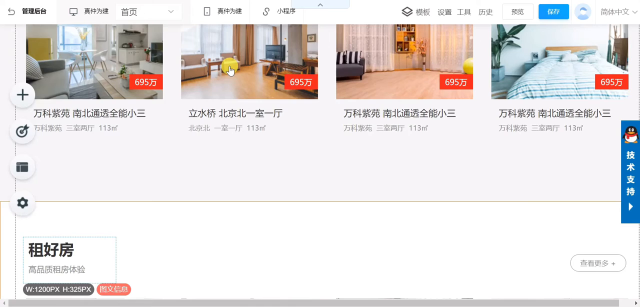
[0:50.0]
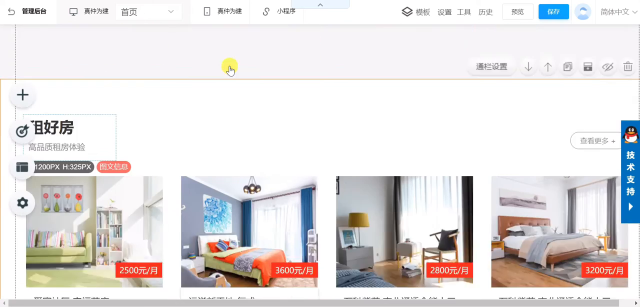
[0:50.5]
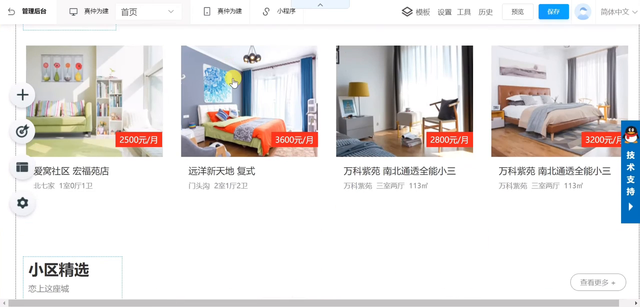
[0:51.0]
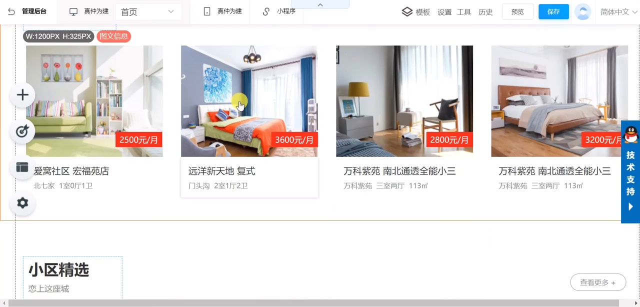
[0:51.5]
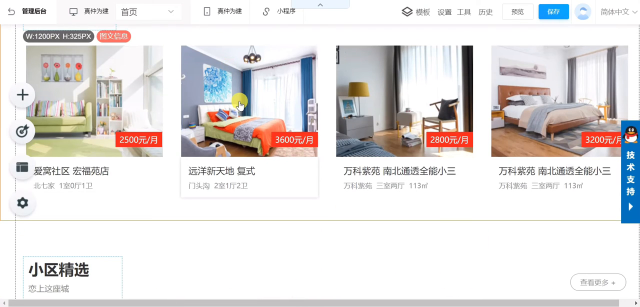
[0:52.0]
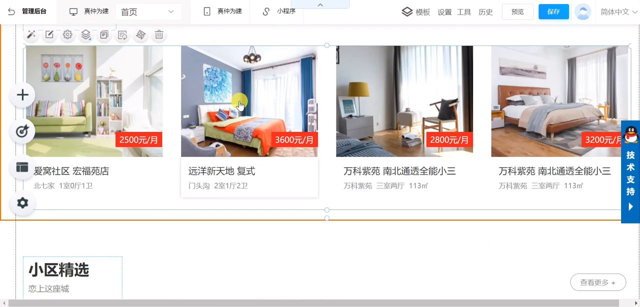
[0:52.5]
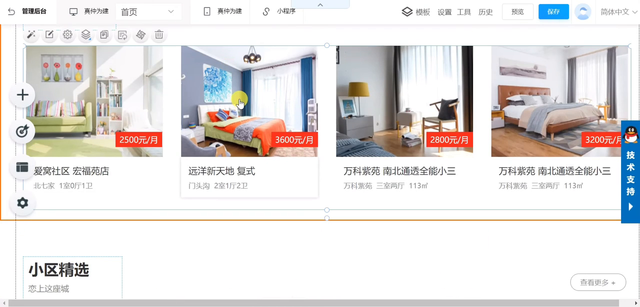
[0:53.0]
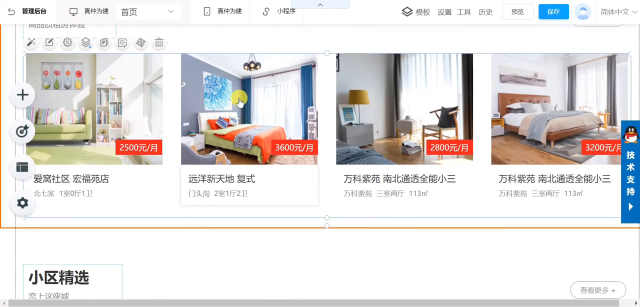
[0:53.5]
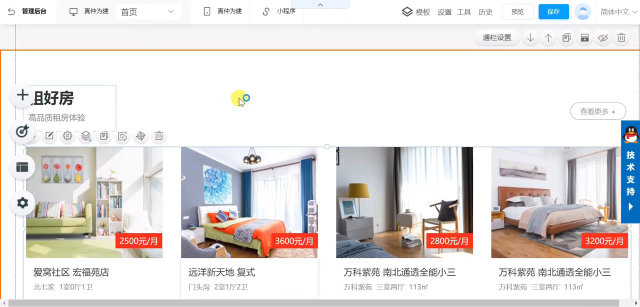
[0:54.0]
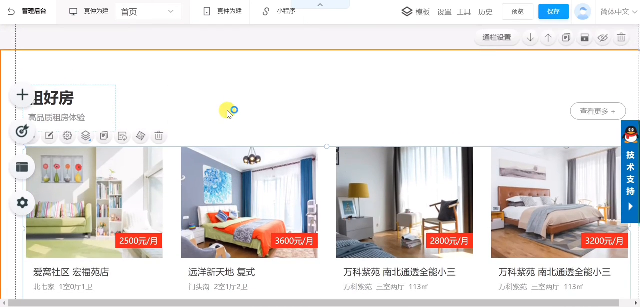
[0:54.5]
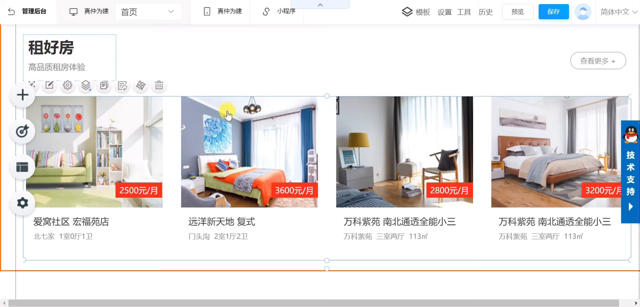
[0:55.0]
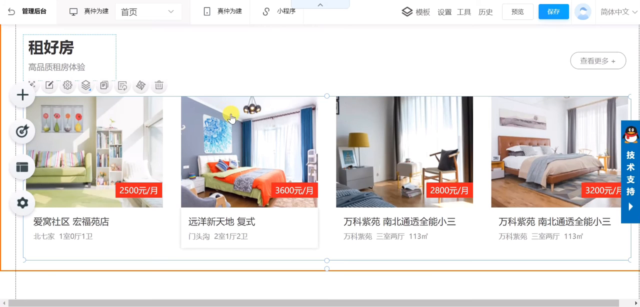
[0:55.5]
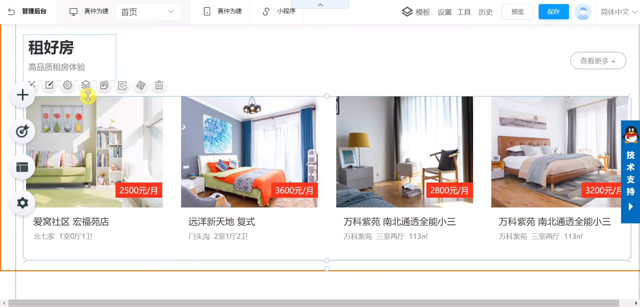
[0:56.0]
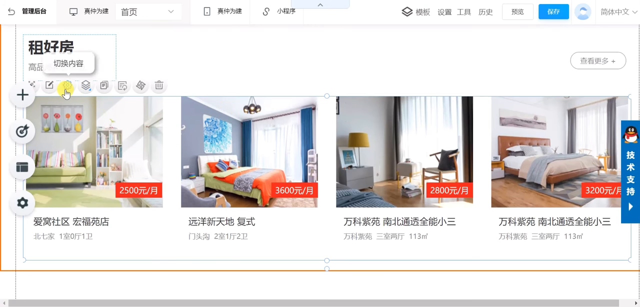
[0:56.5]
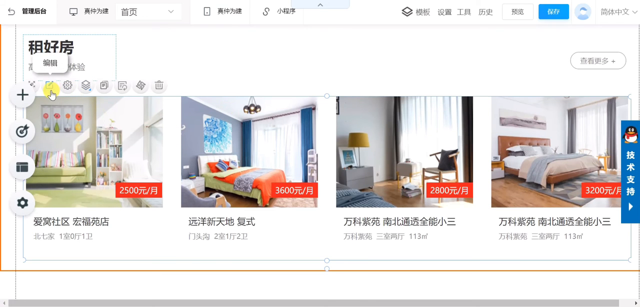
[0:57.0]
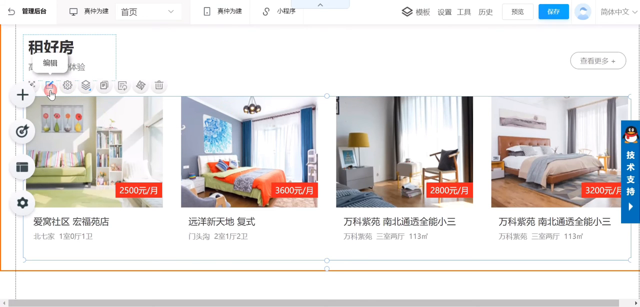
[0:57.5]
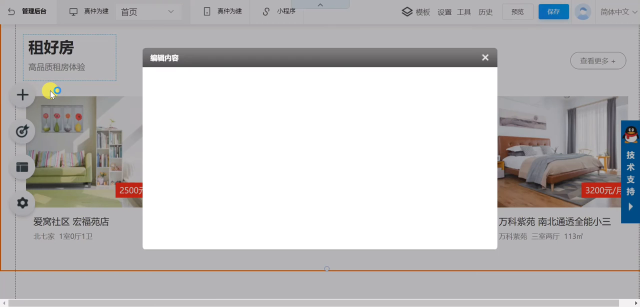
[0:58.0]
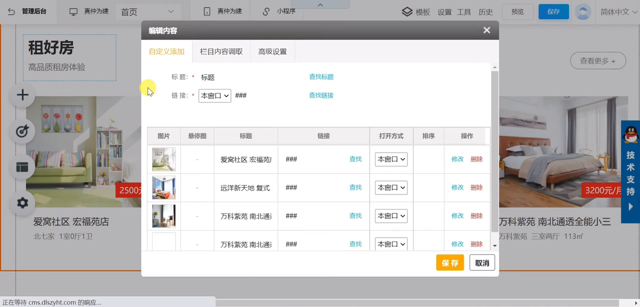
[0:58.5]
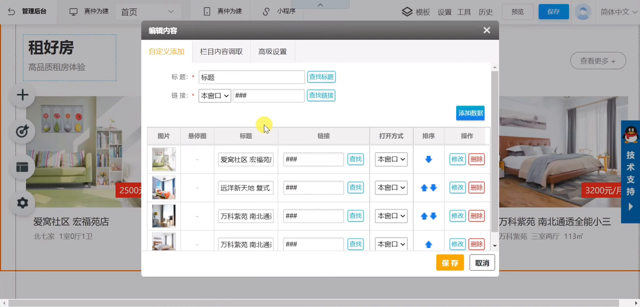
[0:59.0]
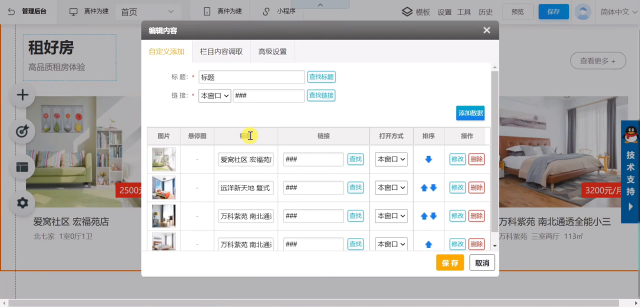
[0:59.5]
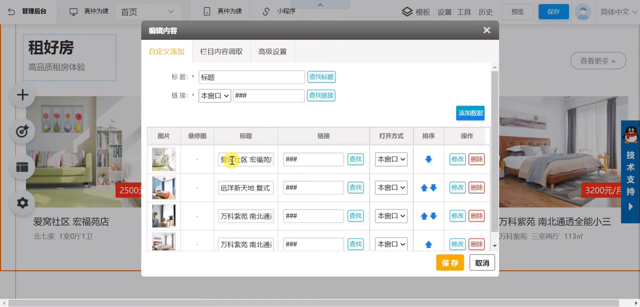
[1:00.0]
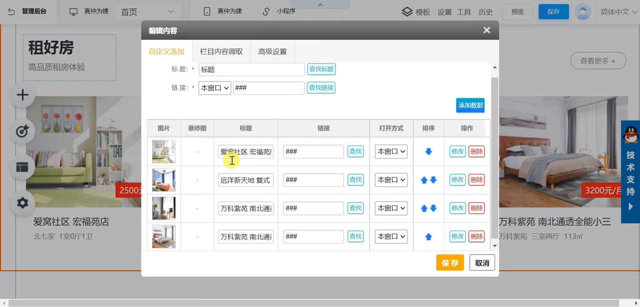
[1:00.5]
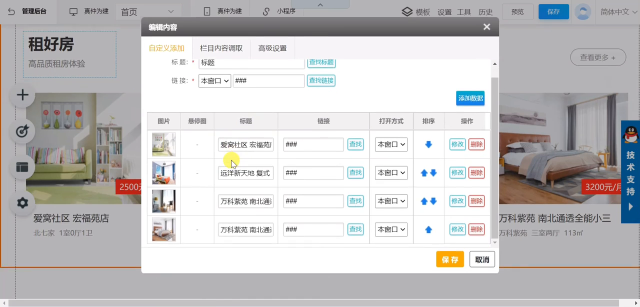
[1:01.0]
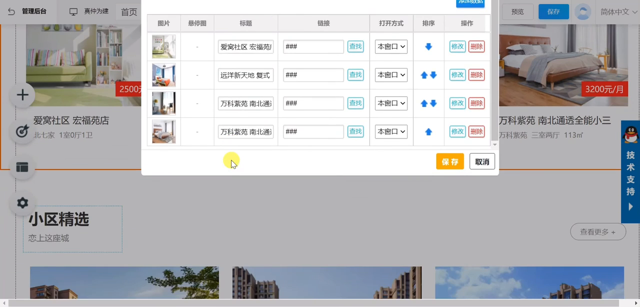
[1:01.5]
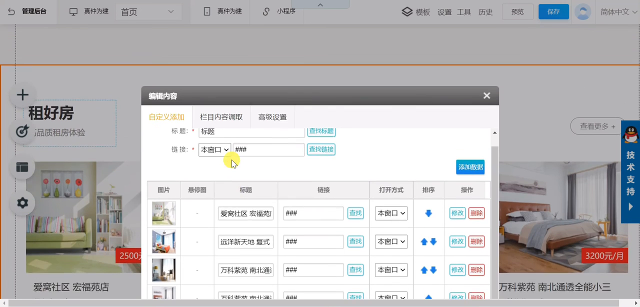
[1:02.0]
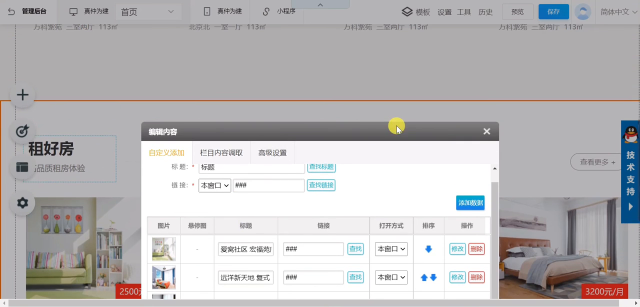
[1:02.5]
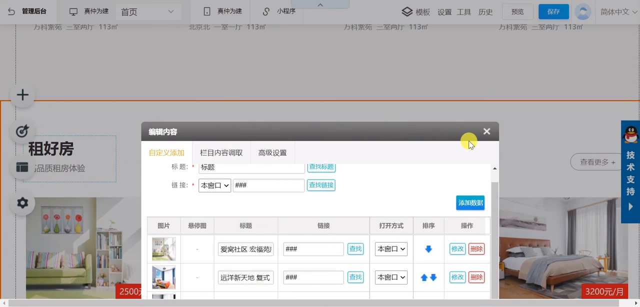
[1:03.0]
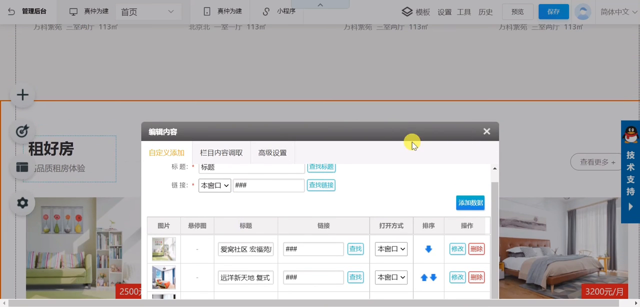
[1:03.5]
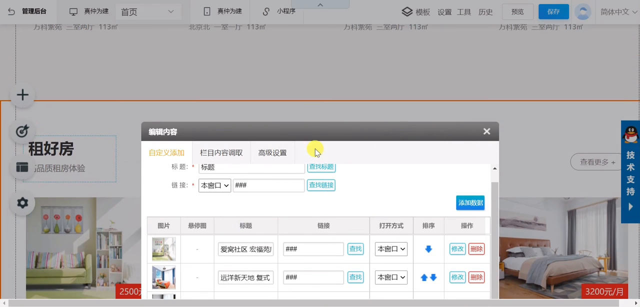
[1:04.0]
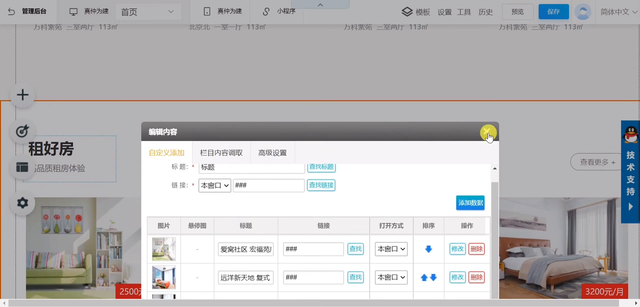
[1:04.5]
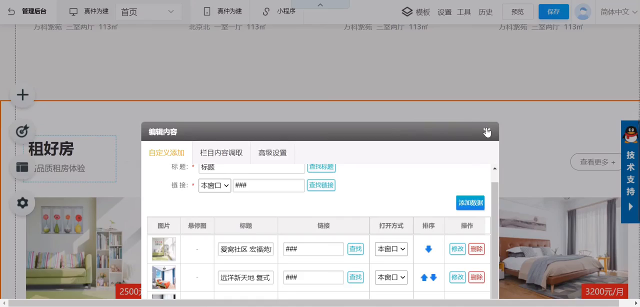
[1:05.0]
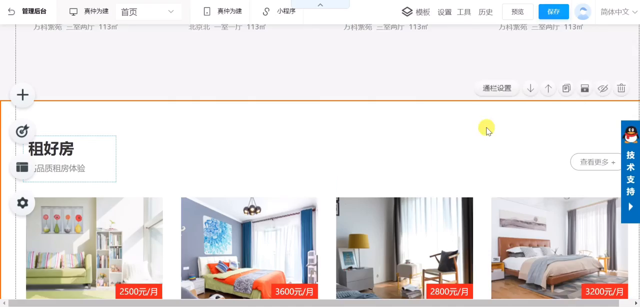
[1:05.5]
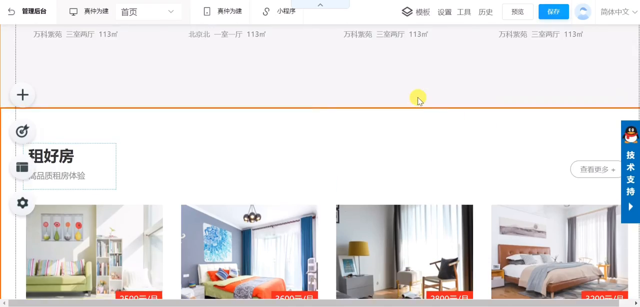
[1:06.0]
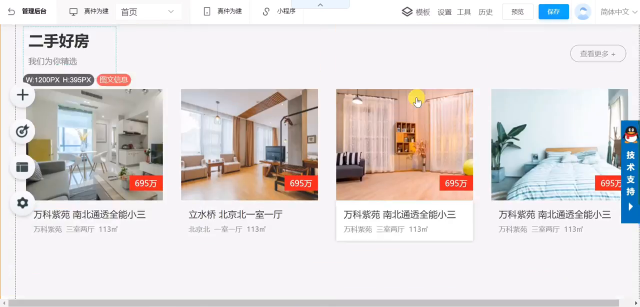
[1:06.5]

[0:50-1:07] Further down the site are listings for residential buildings rather than individual apartments, all with sample text and sample pricing. The person clicks in different portions, showing that the WordPress site is editable from the logged-in view. They click on a box that opens another box with multiple apartment listings, almost as though the site can pull from a main inventory from which items are selected. The page scrolls down to a different category, showing more edit buttons that control things like the arrangement of the squares on the website, as well as editing. The cursor is still a yellow circle hovering around. It clicks out of the menu it is in and begins to scroll back up the screen, almost as if showing what has changed. Bars and tabs show the width and height of the page in English, reading "W1200PX" and "height 325PX", with a corresponding orange button with Asian characters. The cursor scrolls back up to the top of the page, giving a final example of what the website would look like with some adjustments.